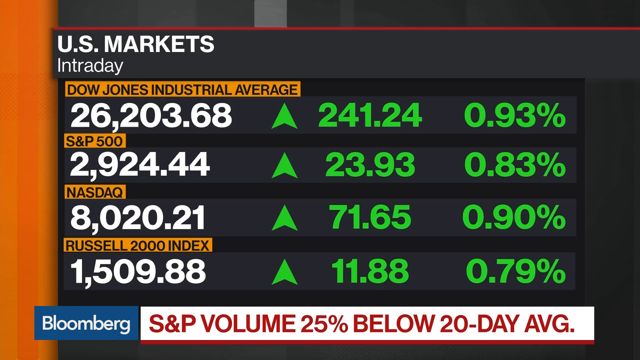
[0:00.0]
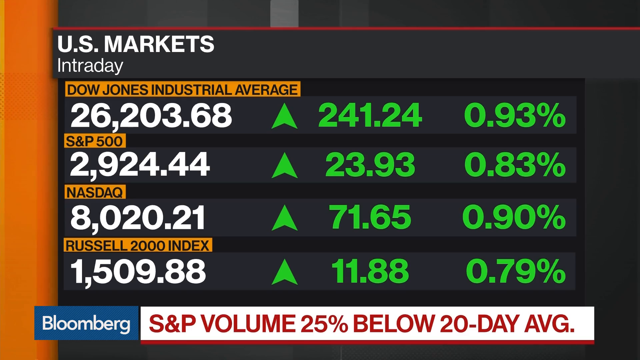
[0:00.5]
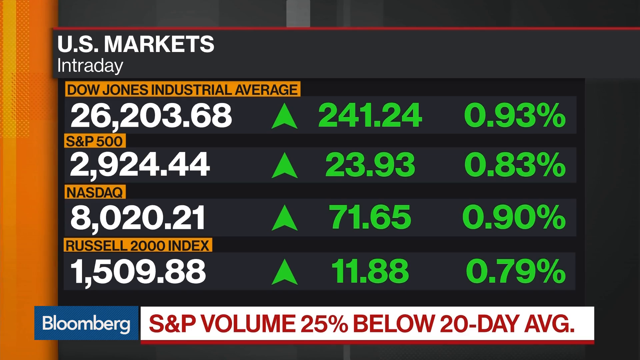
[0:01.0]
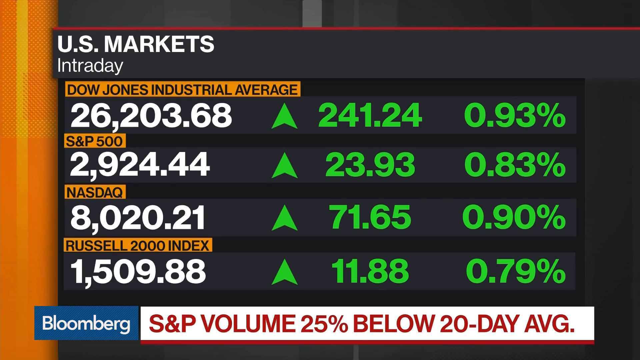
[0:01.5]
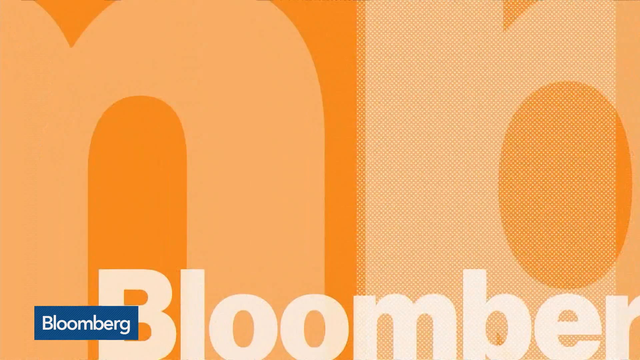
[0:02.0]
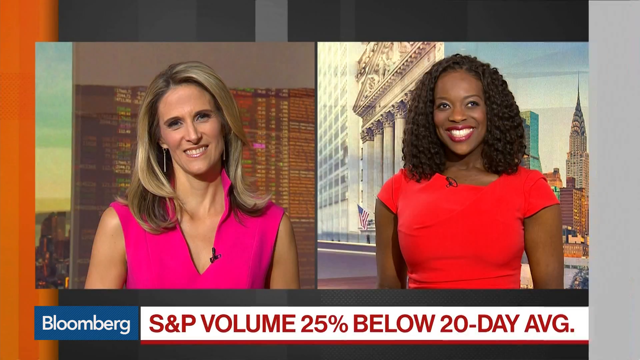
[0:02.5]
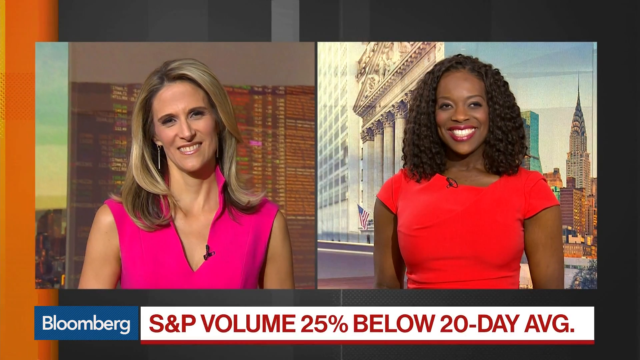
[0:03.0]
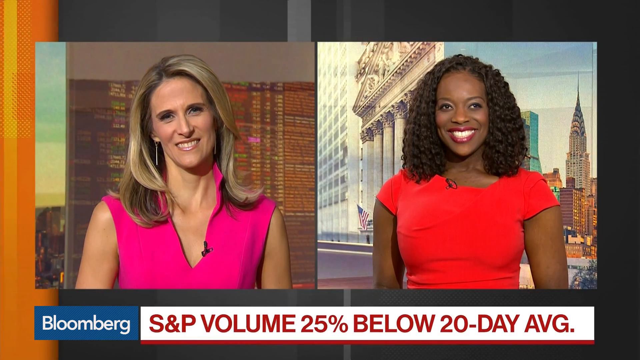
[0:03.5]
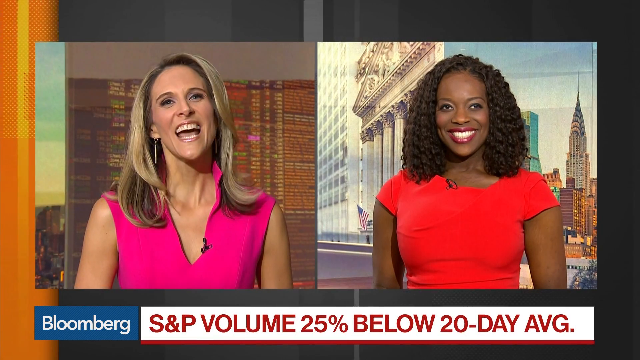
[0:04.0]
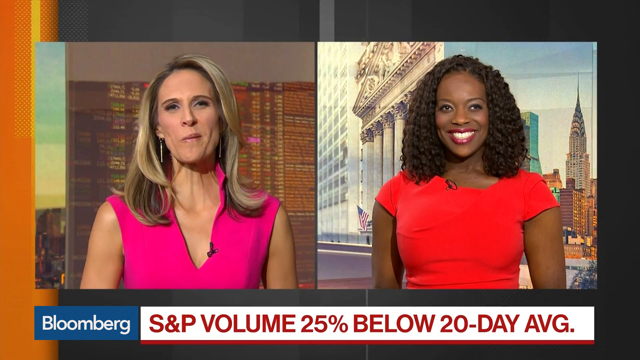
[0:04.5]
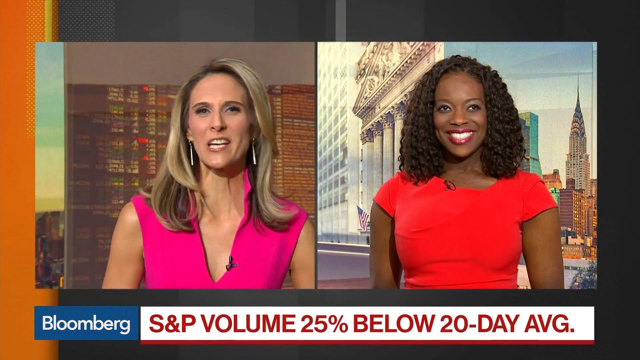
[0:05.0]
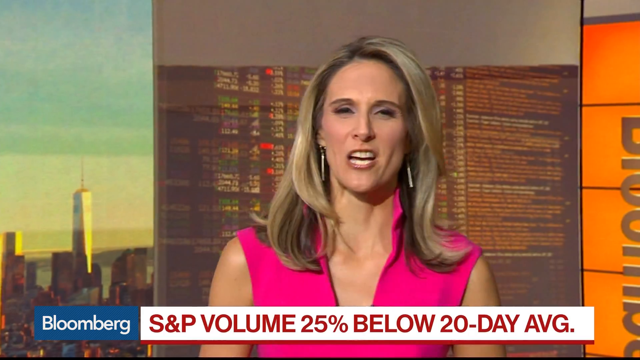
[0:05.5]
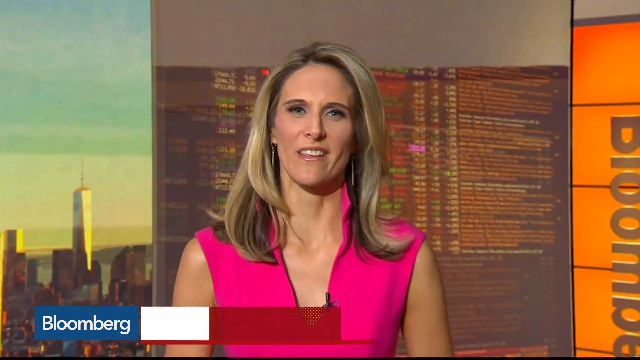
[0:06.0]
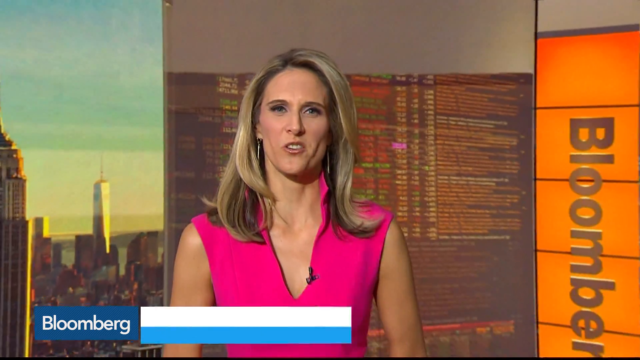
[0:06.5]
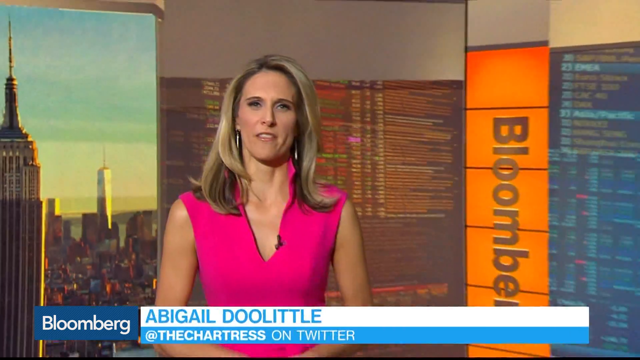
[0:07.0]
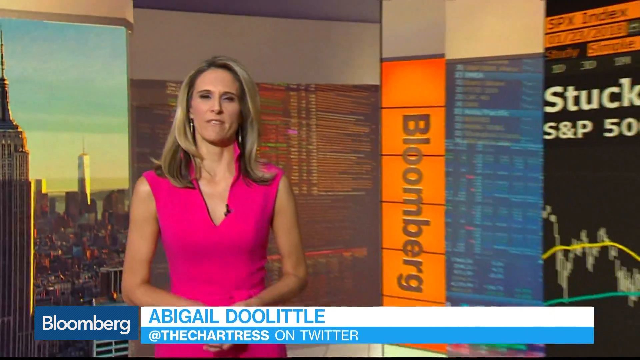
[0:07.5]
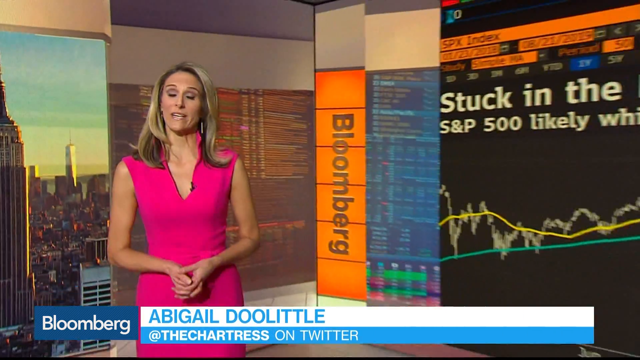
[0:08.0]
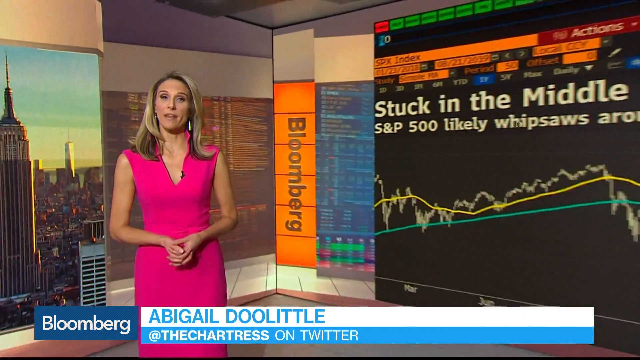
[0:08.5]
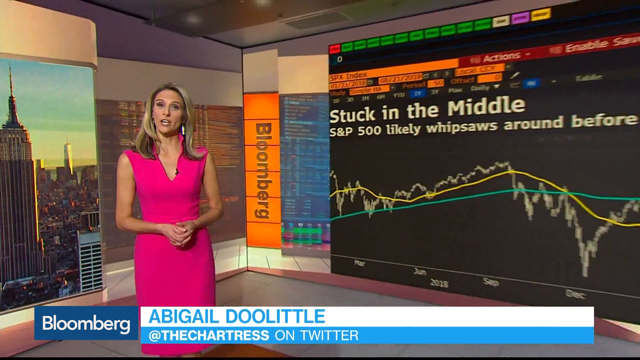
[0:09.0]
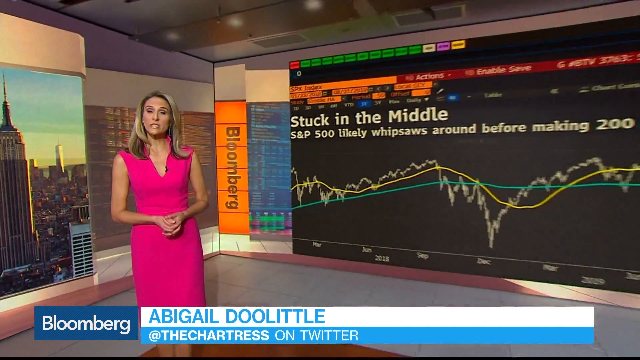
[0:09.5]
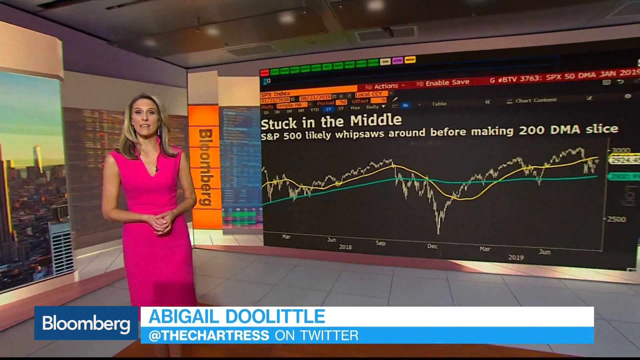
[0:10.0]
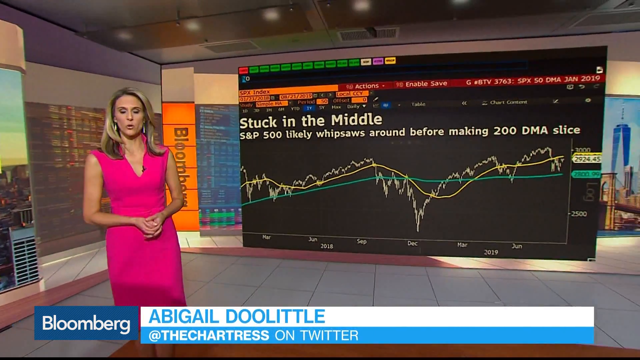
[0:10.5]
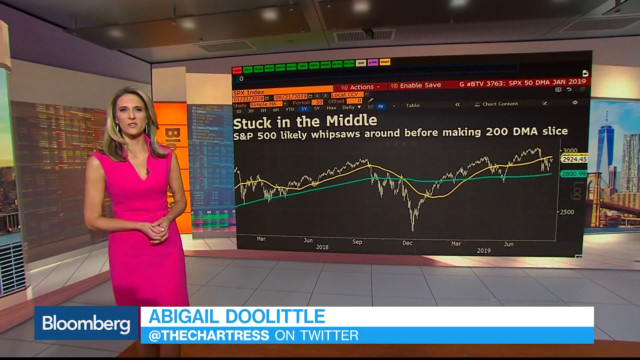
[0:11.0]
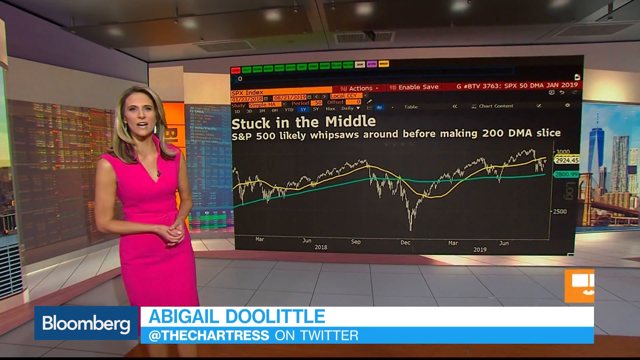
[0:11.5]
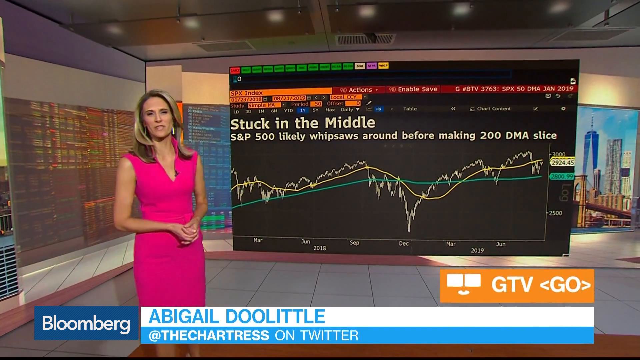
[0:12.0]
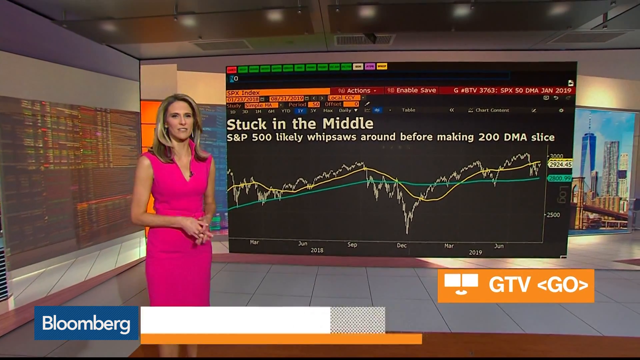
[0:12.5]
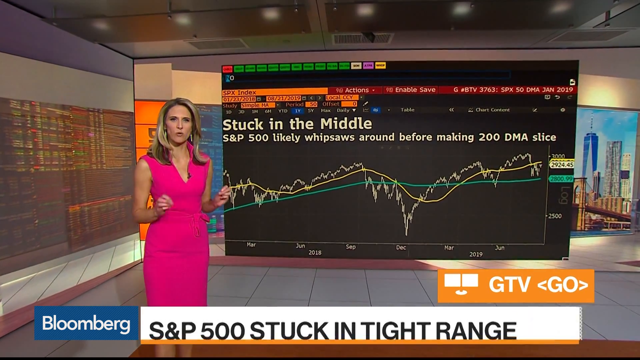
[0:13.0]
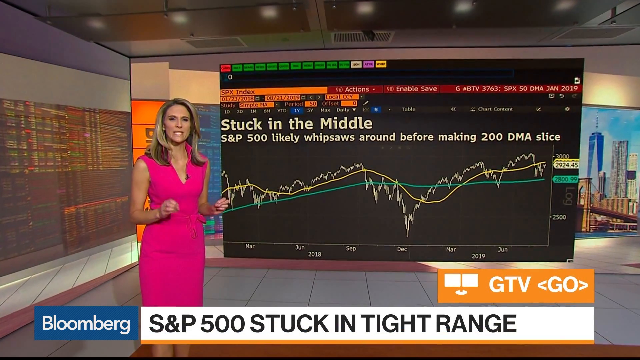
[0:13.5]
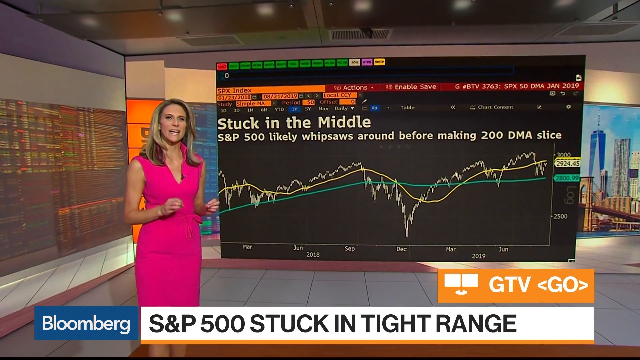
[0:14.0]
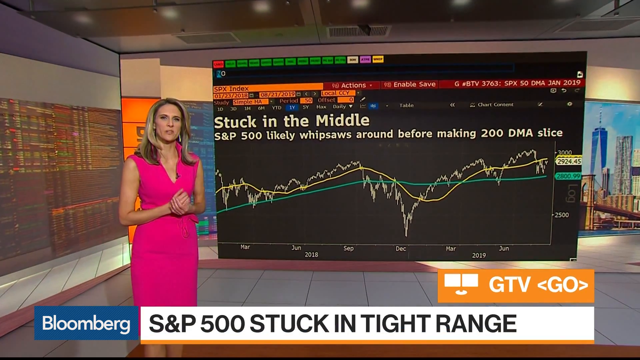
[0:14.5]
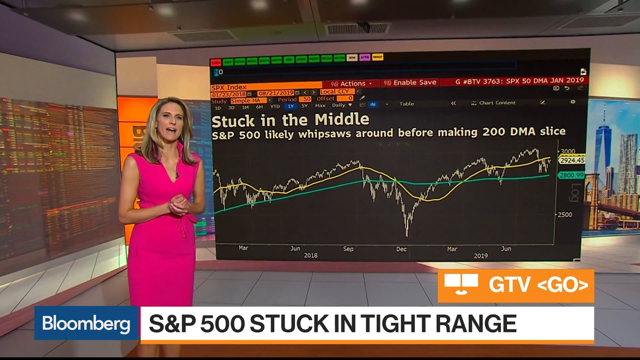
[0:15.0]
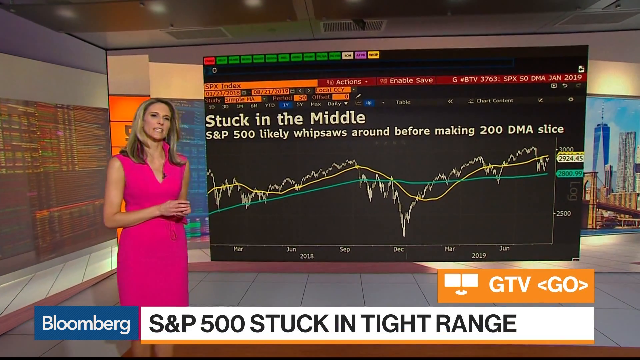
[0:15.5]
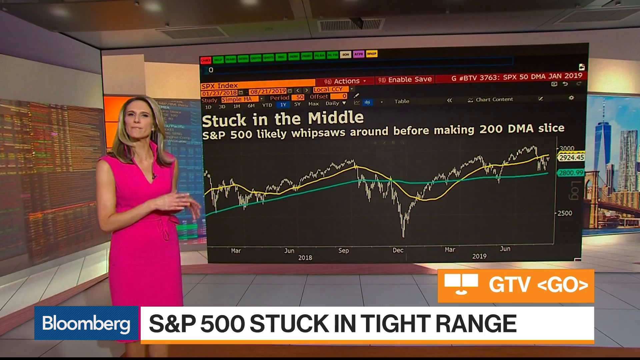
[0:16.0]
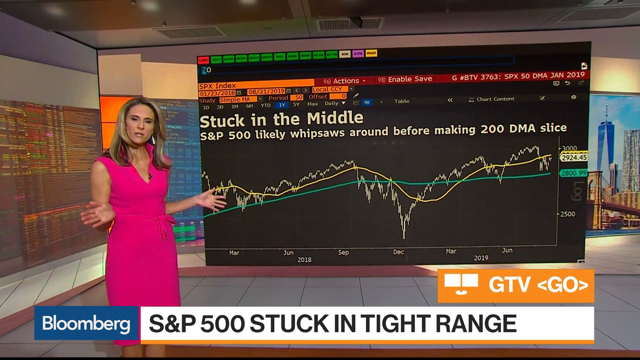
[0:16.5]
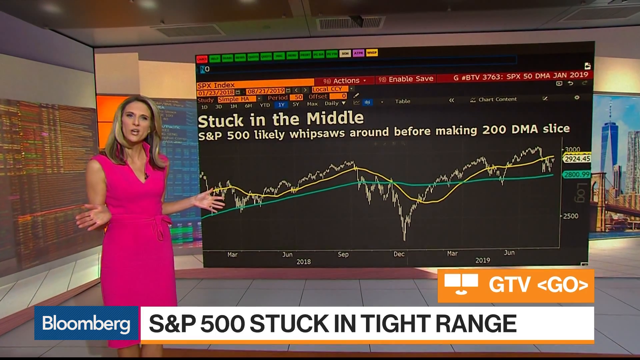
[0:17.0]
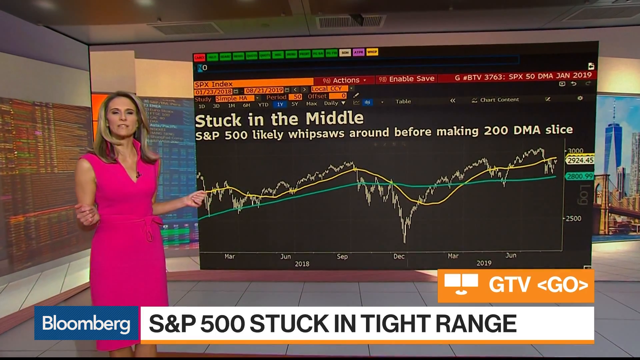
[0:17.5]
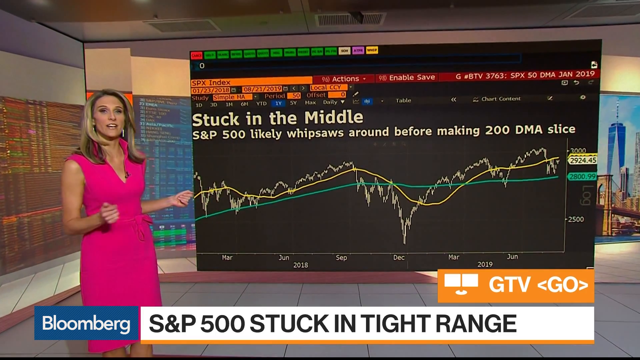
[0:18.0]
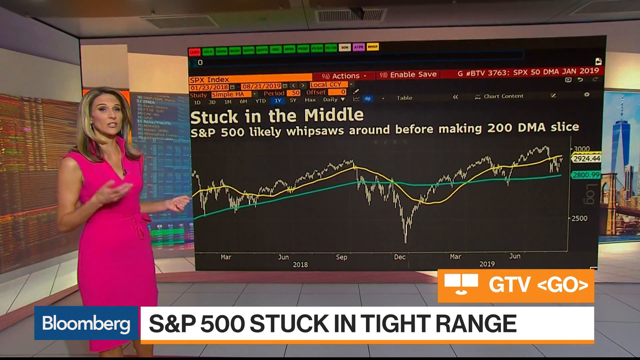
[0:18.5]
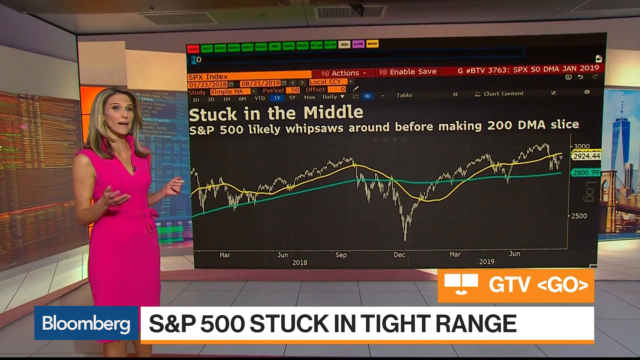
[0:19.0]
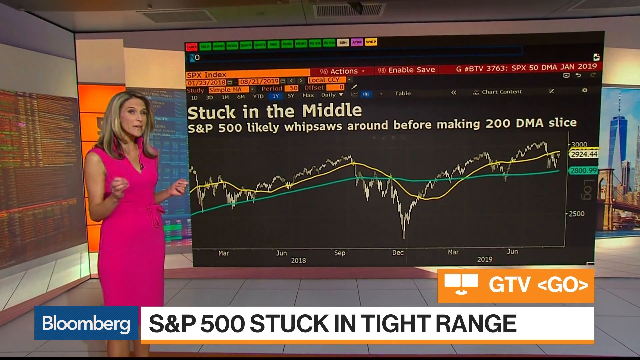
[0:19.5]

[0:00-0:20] A reporter named Abigail, who has long hair and wears a pink blouse, is in a studio. On-screen text reads "S&P 500 stock in a tight range." The screen behind her shows a chart of the stock and how it is progressing, along with some figures. A shot of the world and the S&P 500 are also visible.